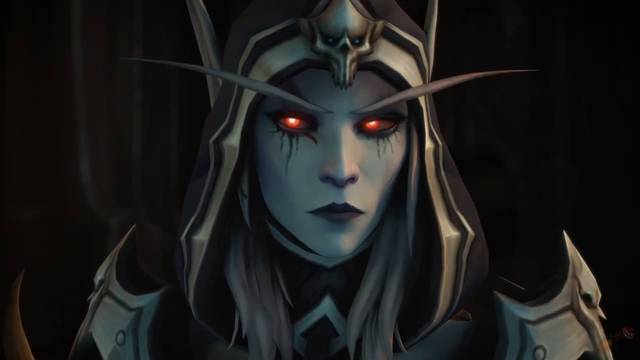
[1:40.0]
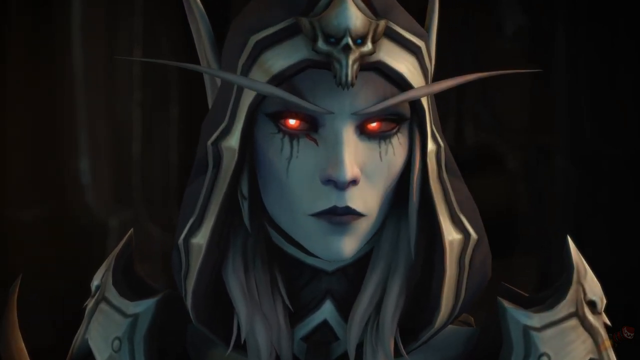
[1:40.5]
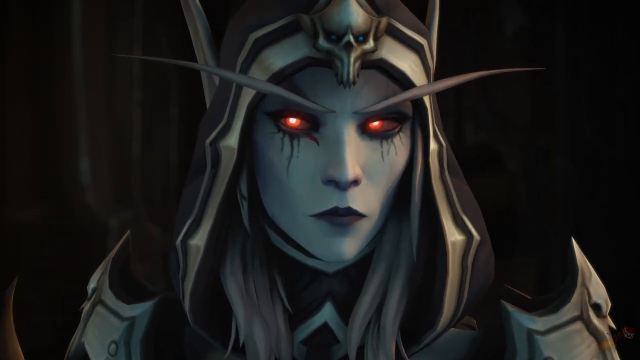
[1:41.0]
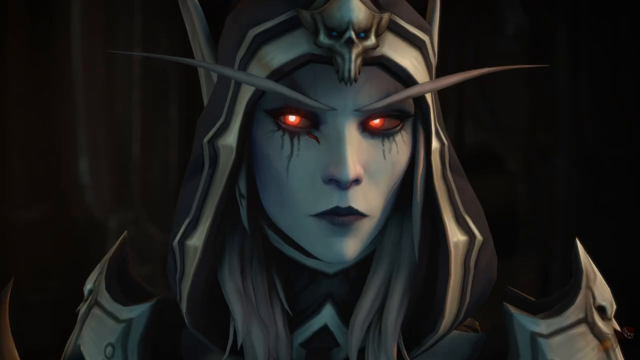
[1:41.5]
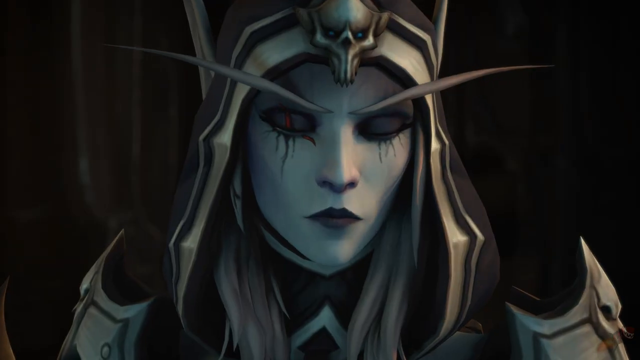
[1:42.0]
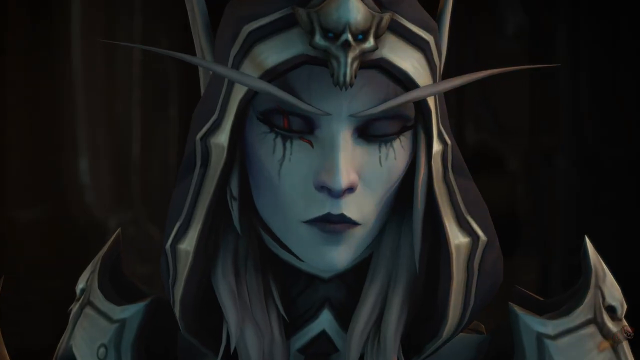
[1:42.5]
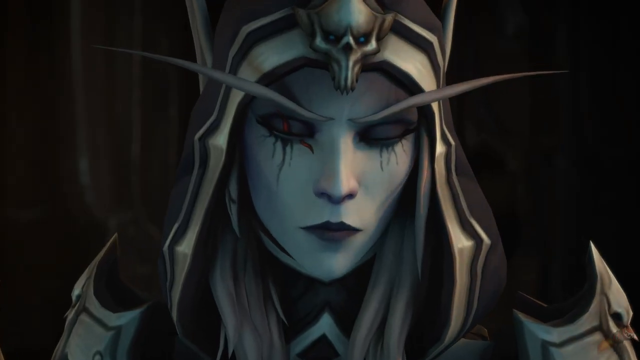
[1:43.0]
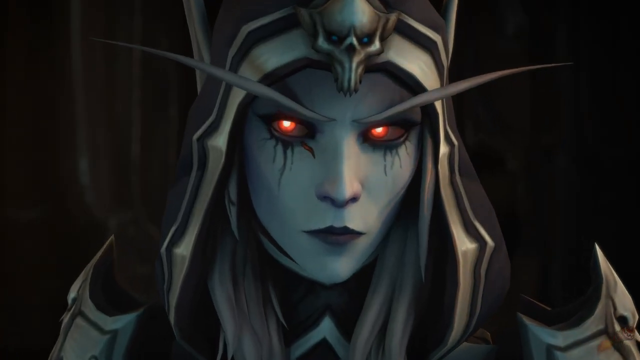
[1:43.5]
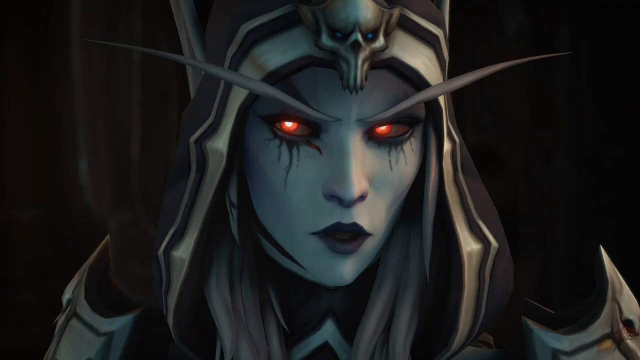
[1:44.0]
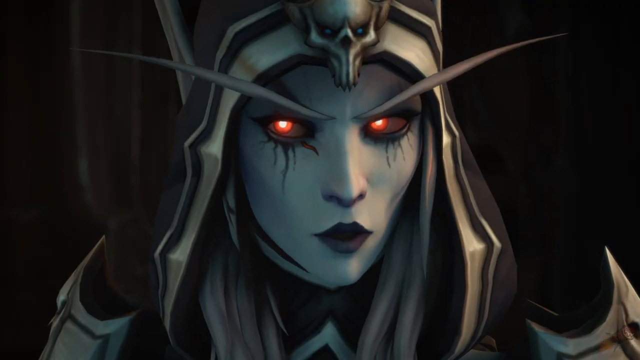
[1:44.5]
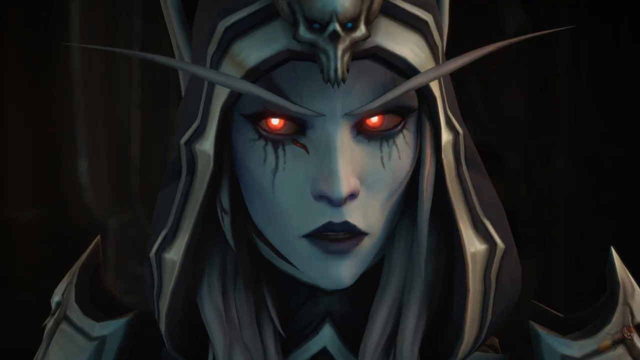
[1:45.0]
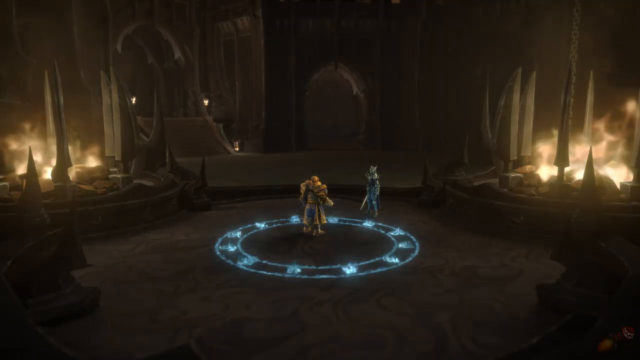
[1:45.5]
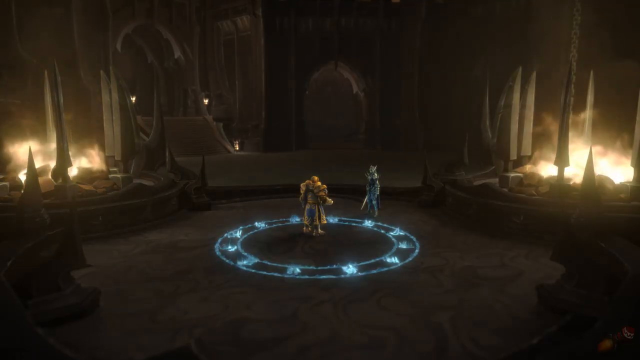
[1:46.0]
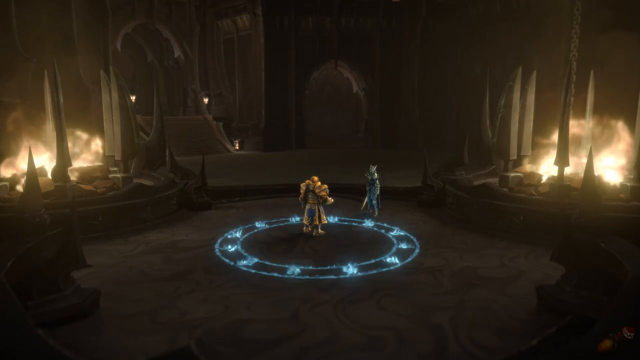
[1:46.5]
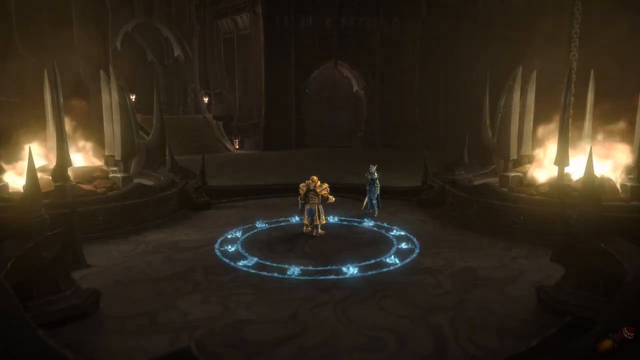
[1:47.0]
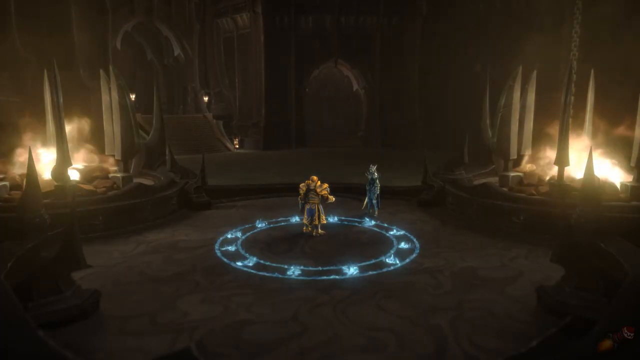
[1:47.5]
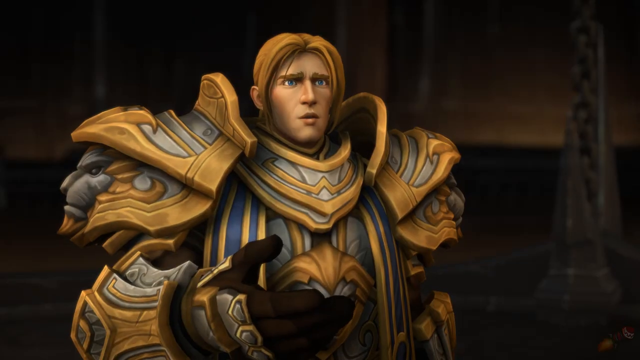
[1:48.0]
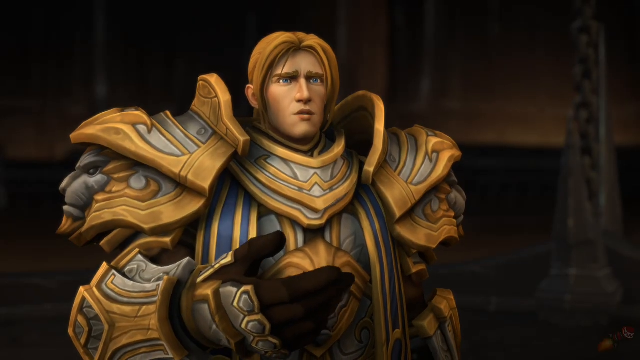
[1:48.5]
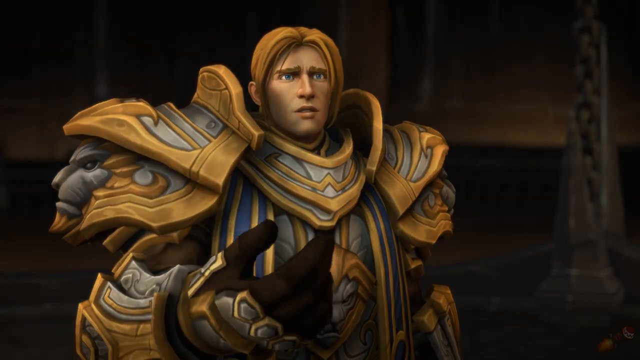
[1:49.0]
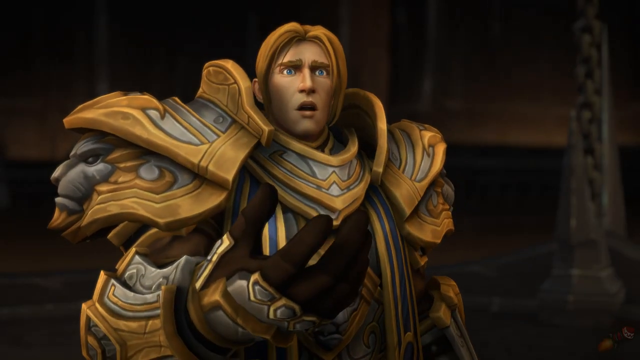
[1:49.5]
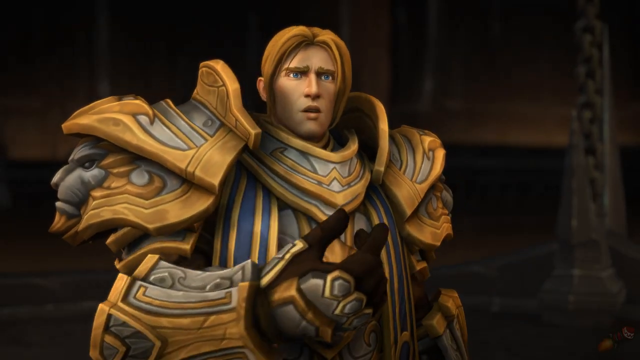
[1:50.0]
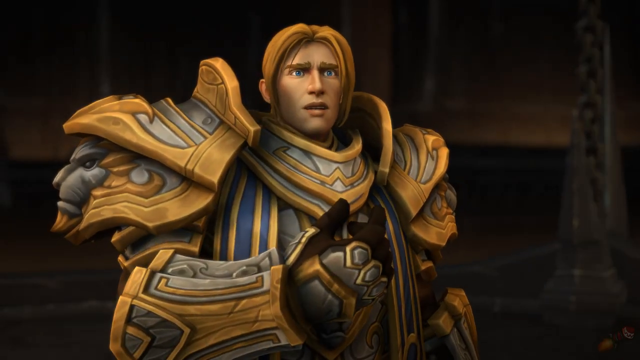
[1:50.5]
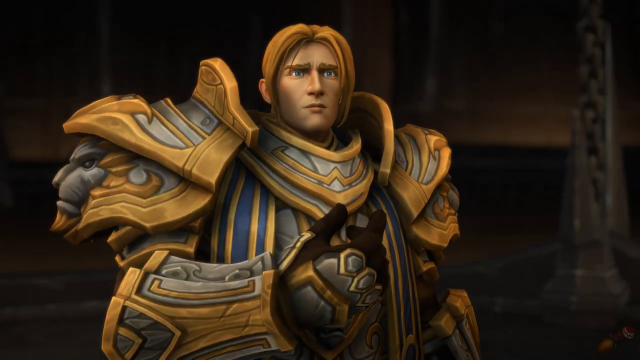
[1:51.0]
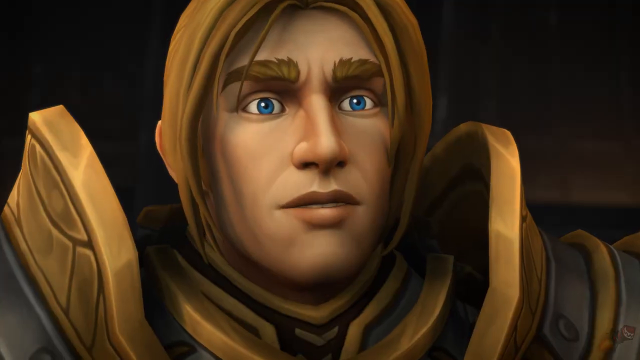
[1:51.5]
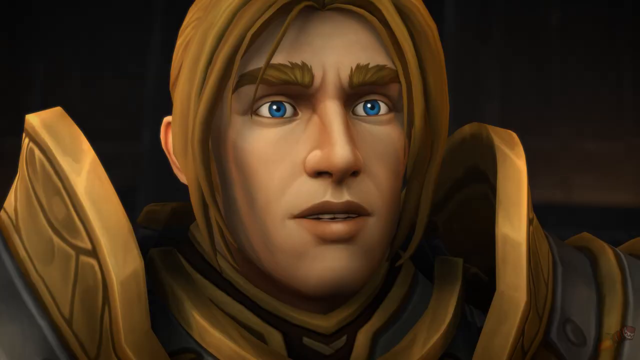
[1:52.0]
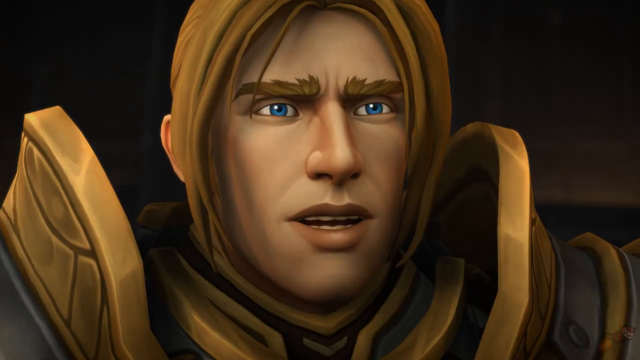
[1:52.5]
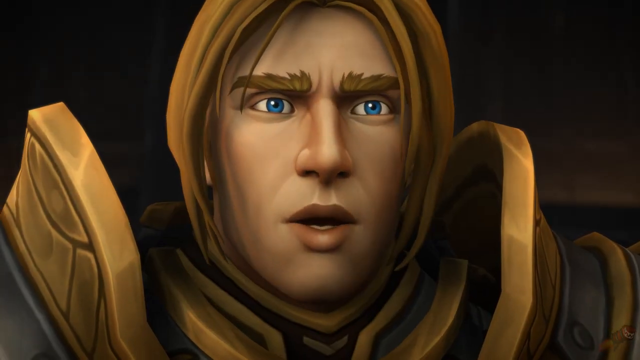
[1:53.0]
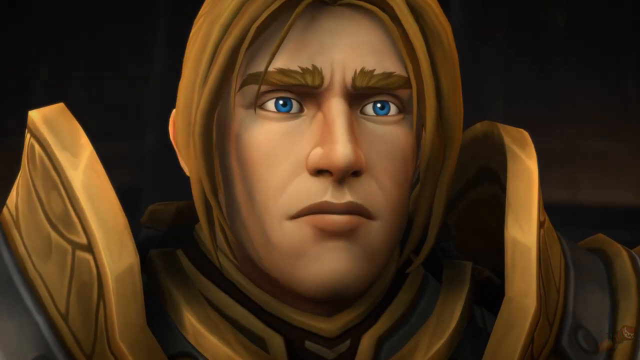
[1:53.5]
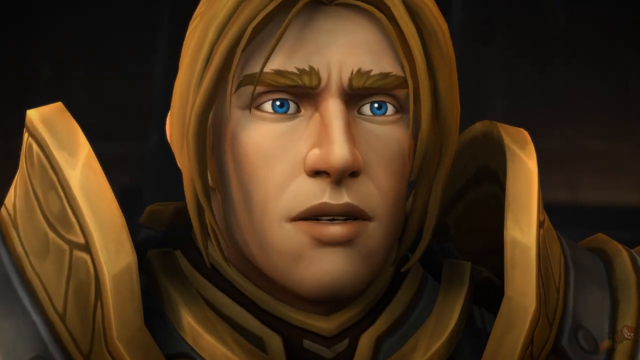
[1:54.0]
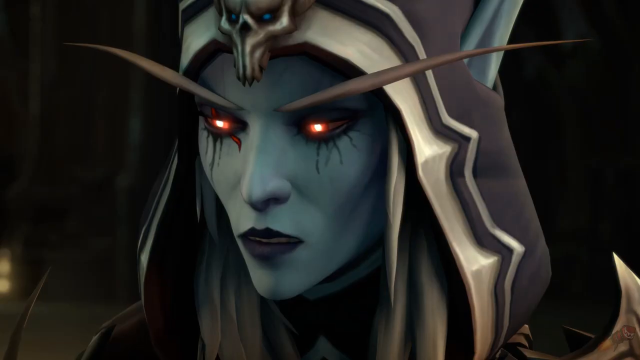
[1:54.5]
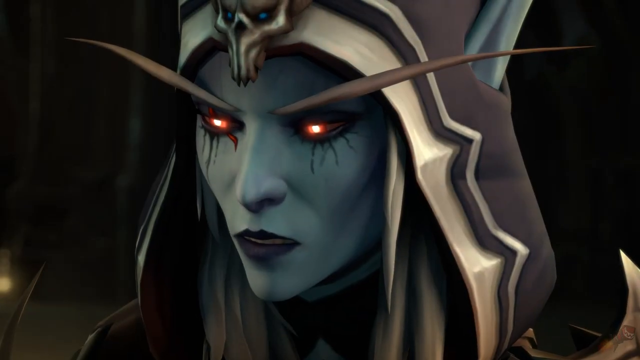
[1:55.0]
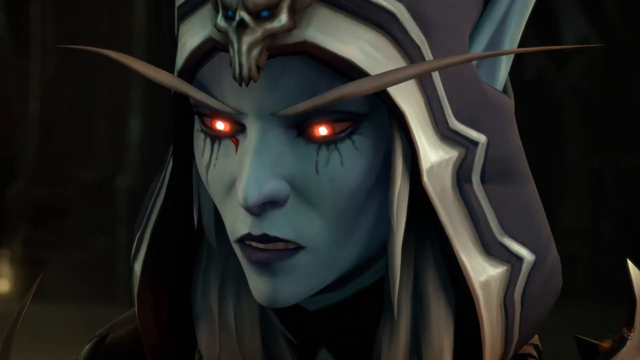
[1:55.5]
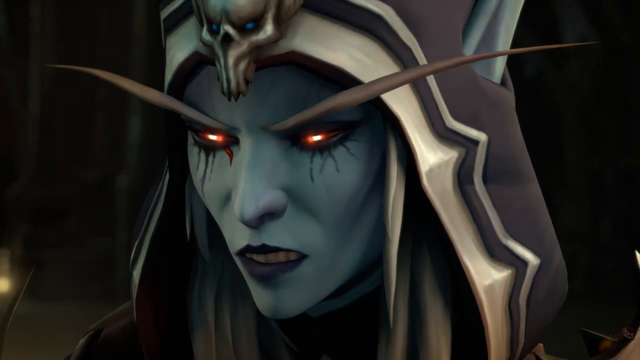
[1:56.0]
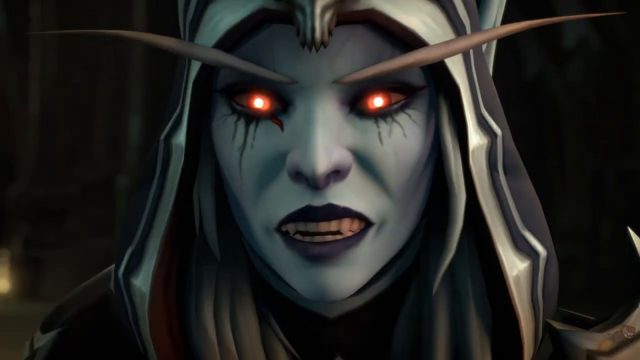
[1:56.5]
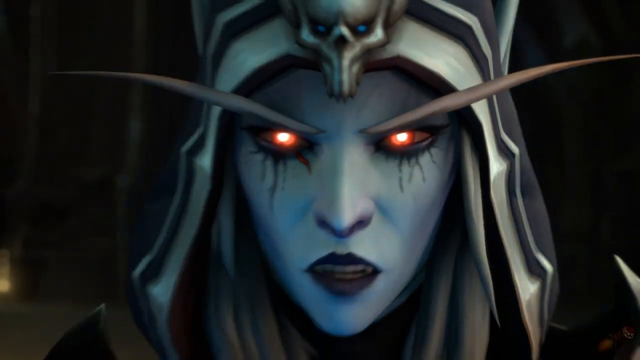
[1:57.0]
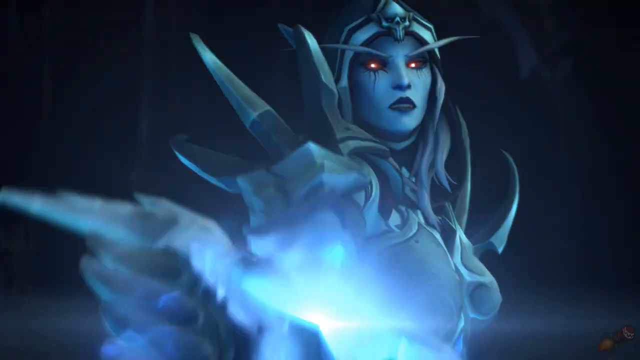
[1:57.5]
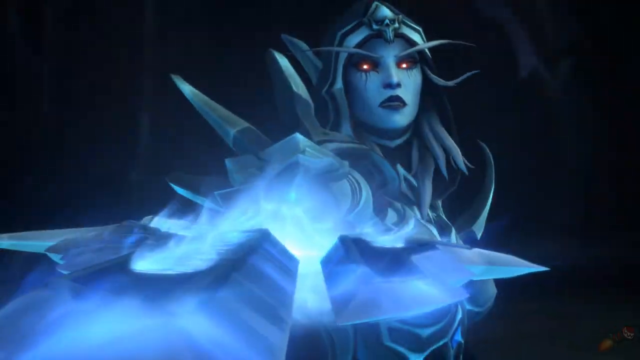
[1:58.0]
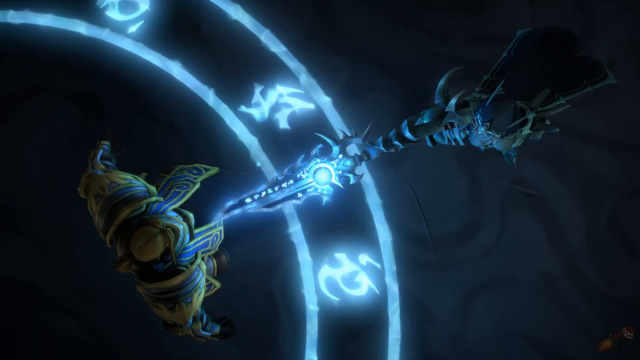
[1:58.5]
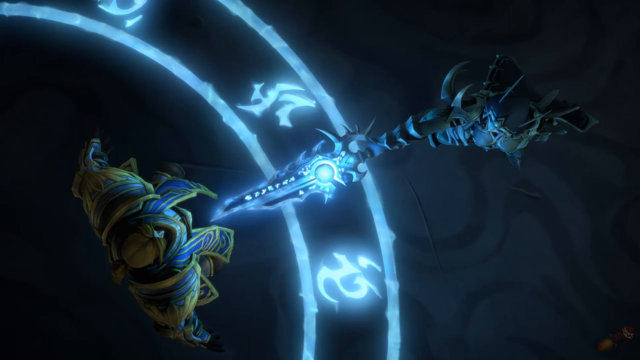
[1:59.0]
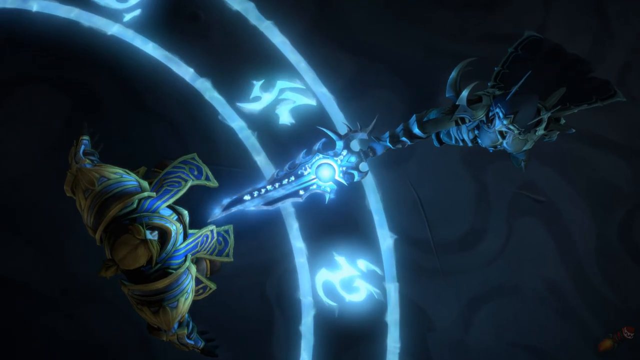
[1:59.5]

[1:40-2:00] A group of video game characters fight against each other, trying to slay and slash their opponents.